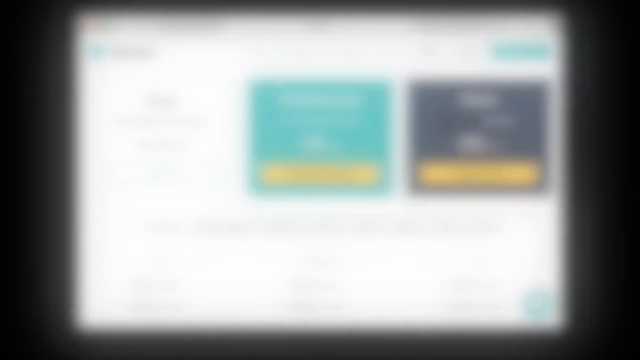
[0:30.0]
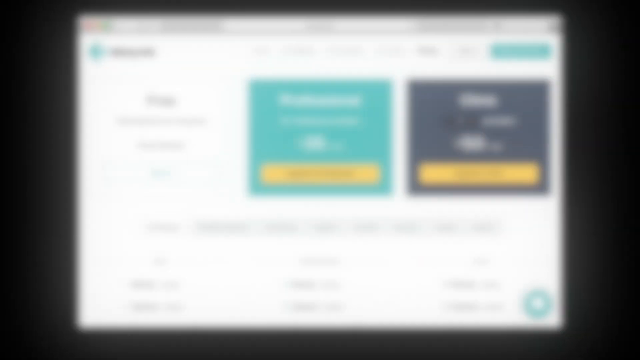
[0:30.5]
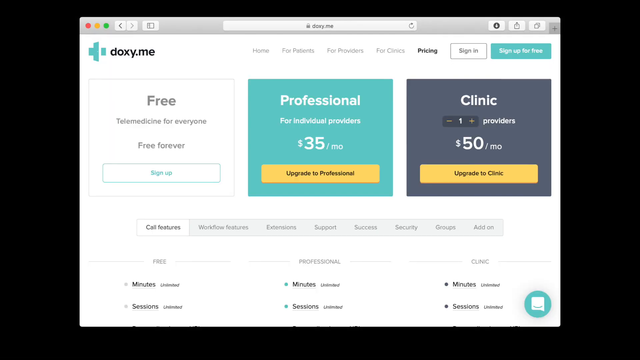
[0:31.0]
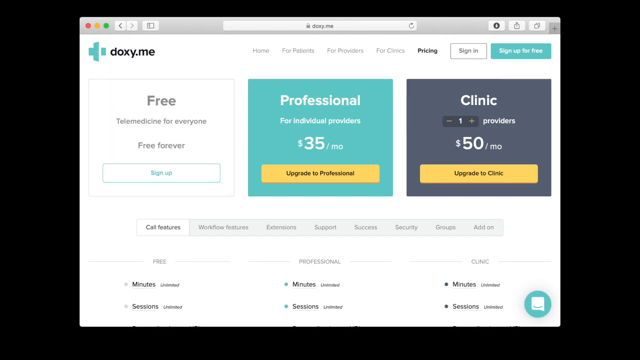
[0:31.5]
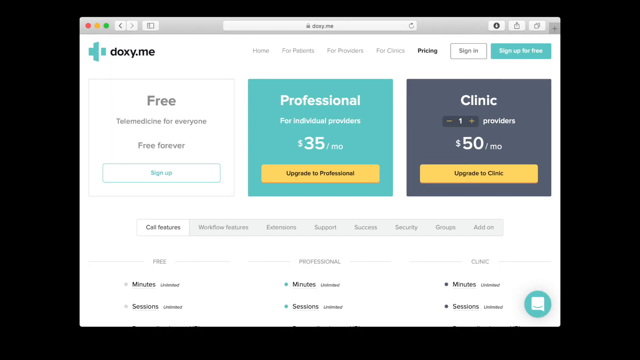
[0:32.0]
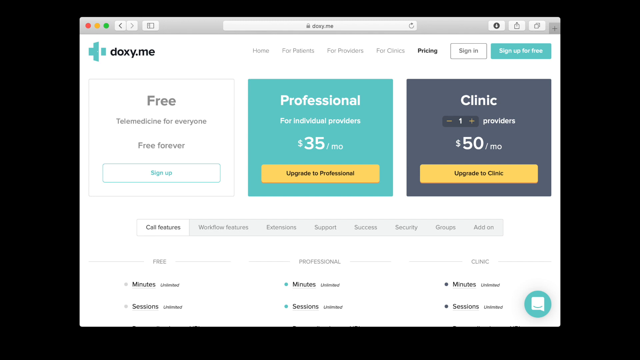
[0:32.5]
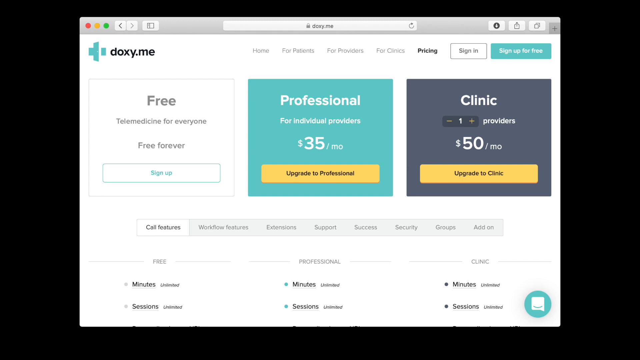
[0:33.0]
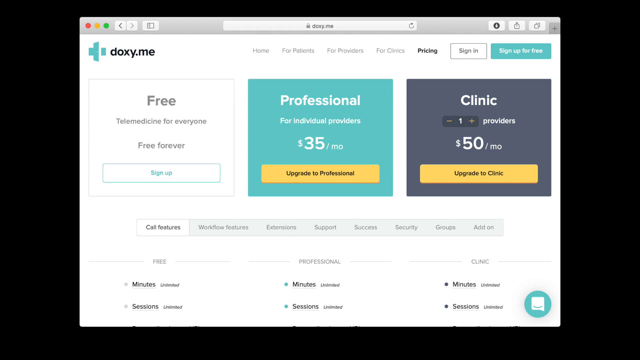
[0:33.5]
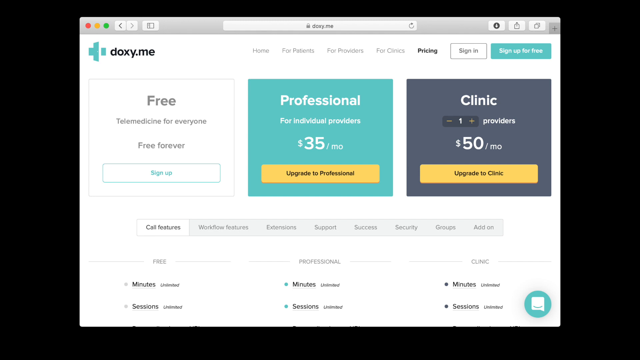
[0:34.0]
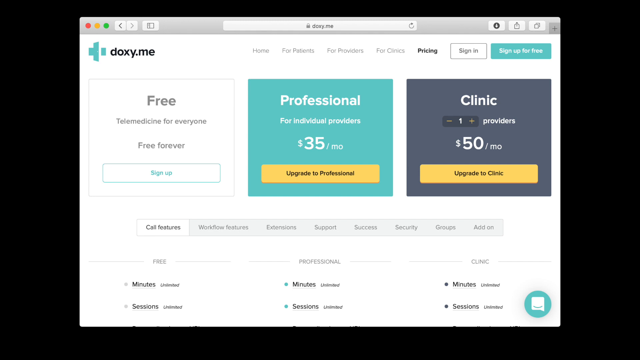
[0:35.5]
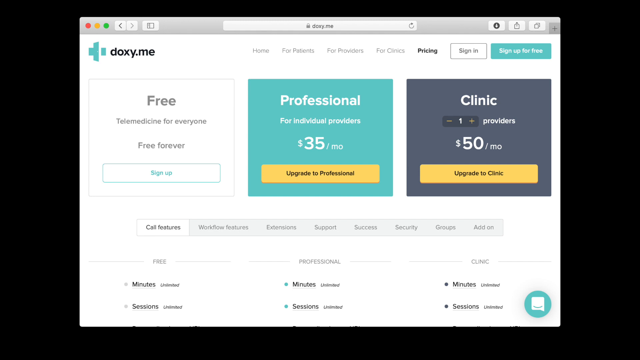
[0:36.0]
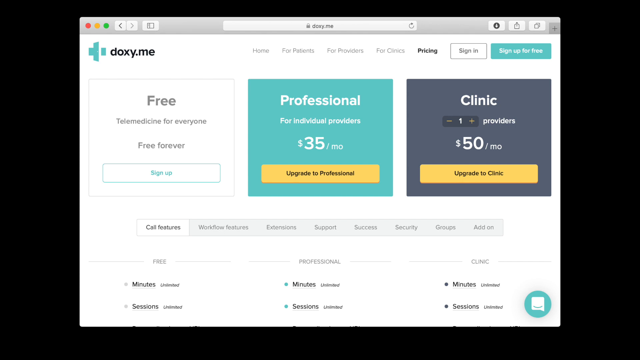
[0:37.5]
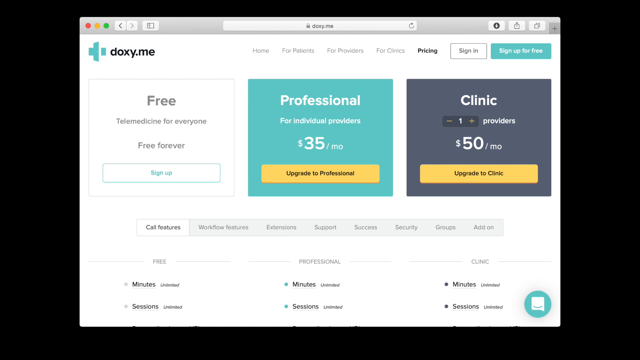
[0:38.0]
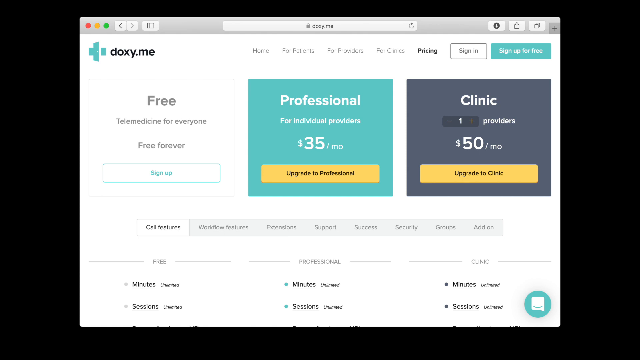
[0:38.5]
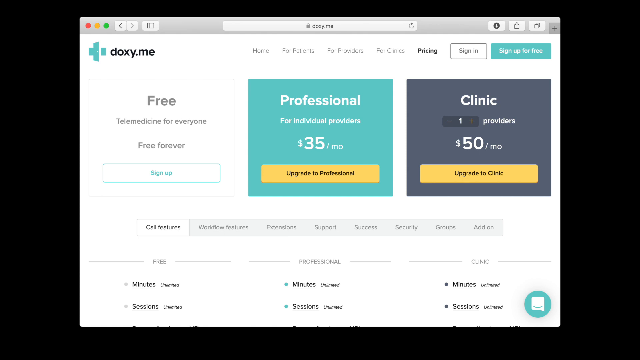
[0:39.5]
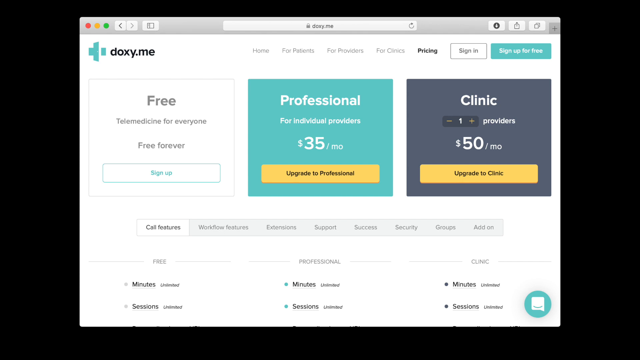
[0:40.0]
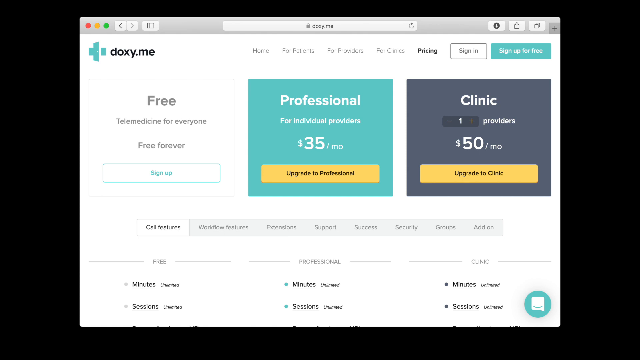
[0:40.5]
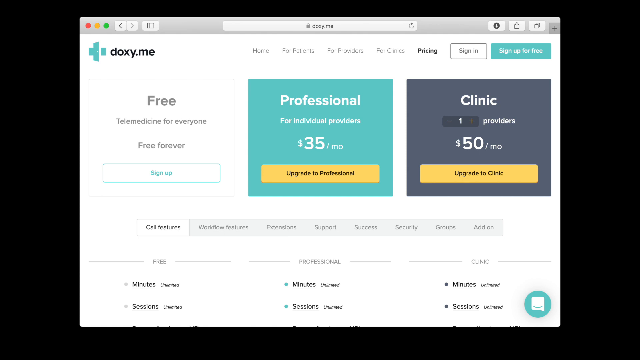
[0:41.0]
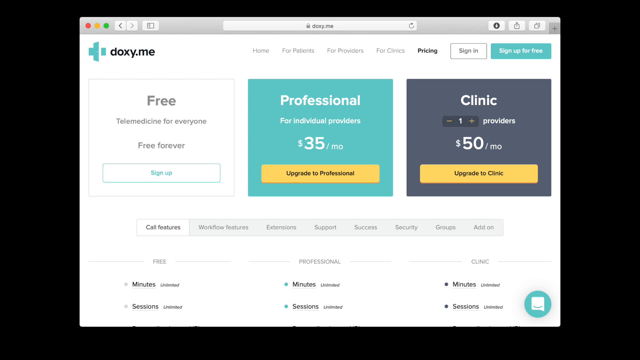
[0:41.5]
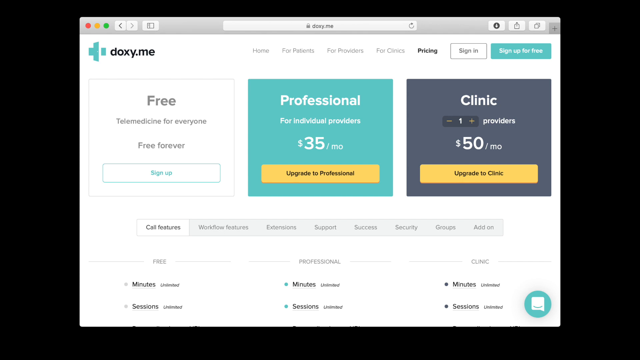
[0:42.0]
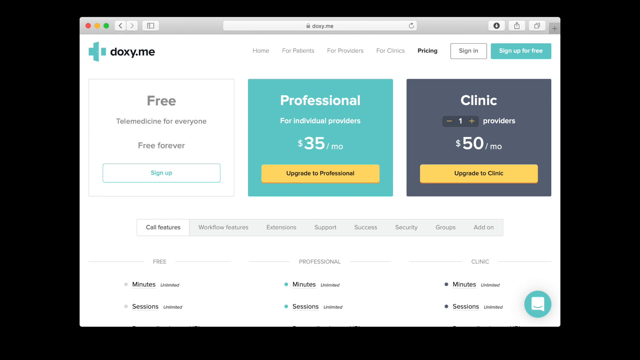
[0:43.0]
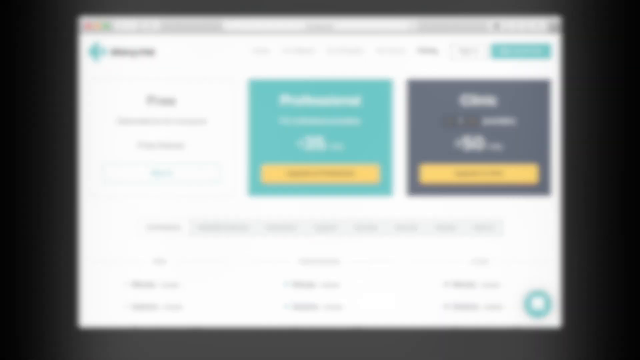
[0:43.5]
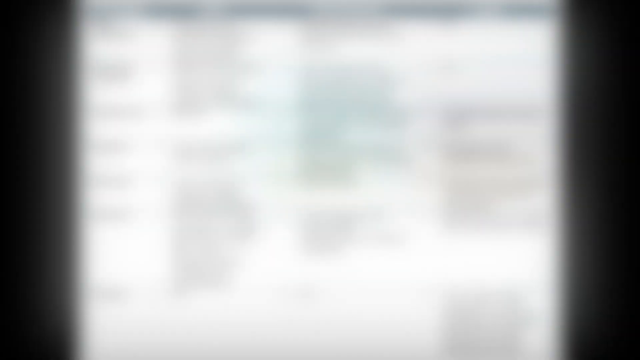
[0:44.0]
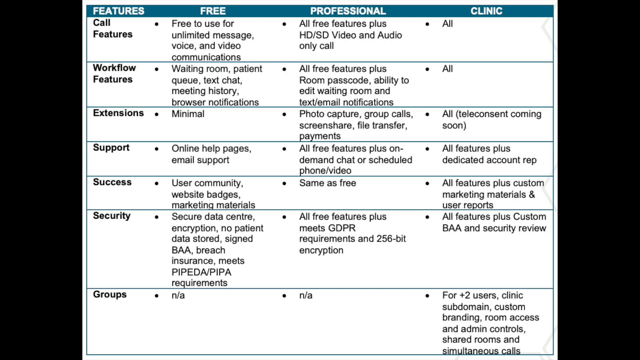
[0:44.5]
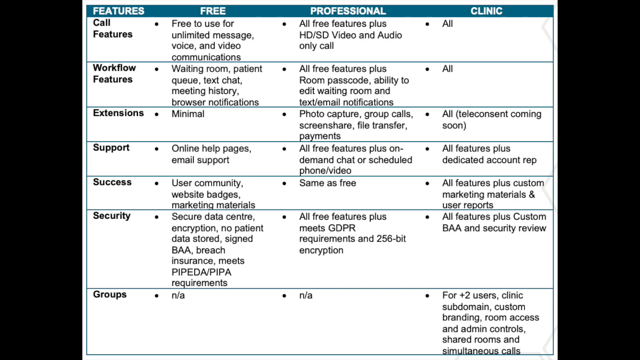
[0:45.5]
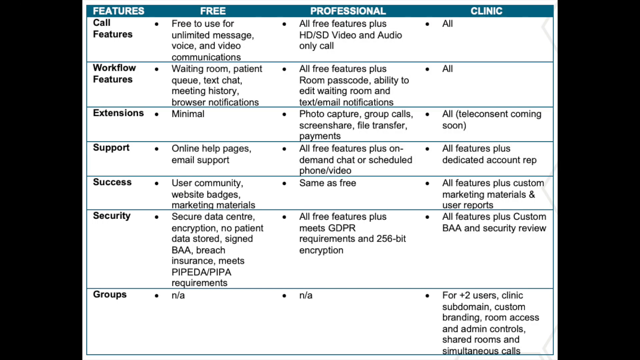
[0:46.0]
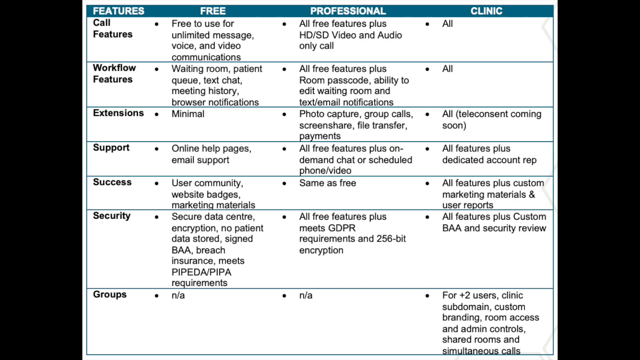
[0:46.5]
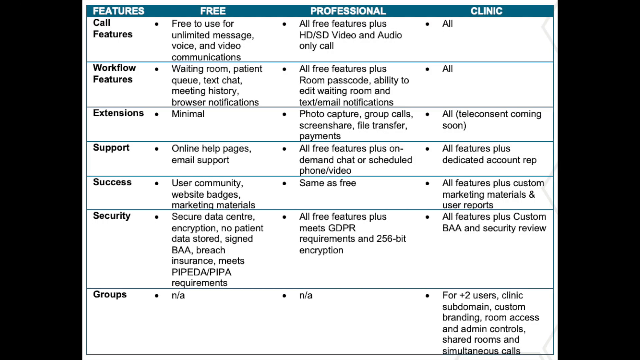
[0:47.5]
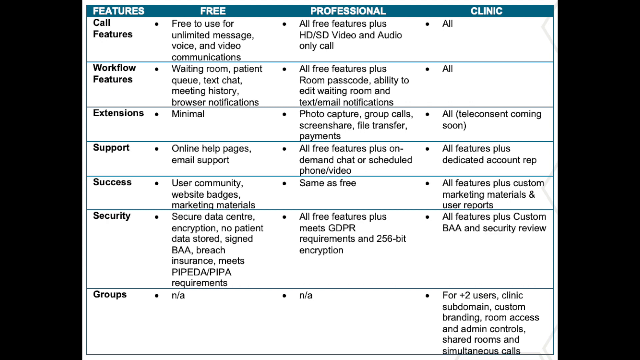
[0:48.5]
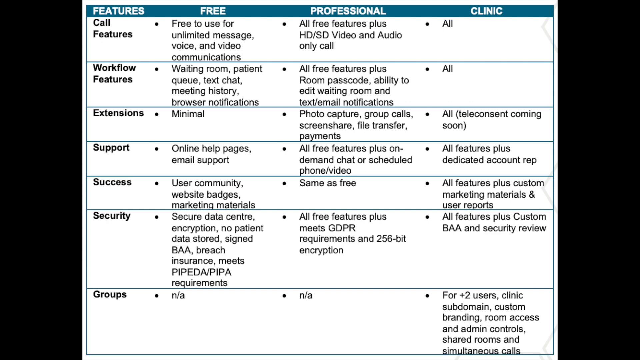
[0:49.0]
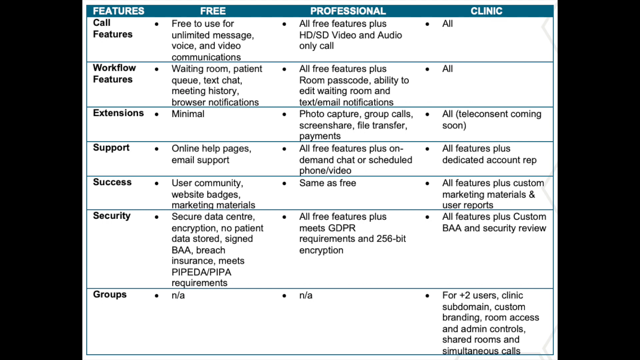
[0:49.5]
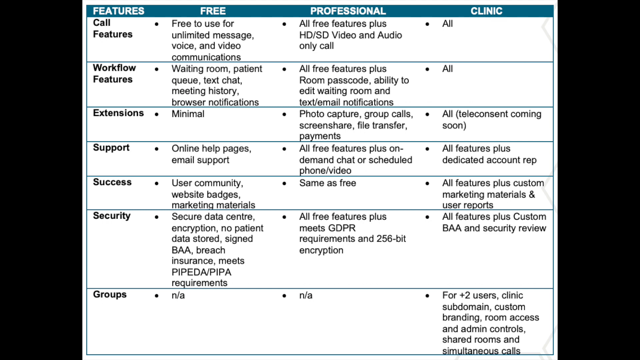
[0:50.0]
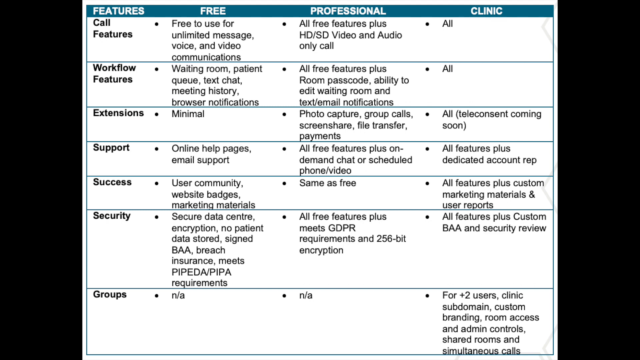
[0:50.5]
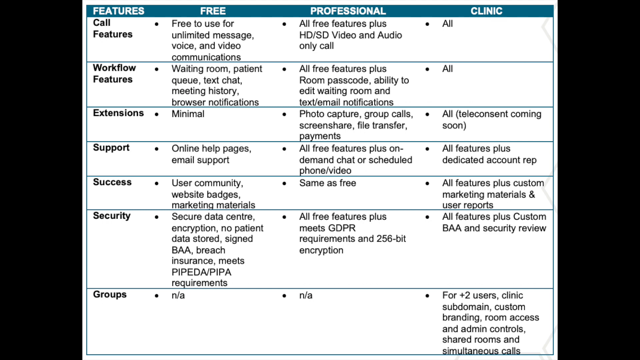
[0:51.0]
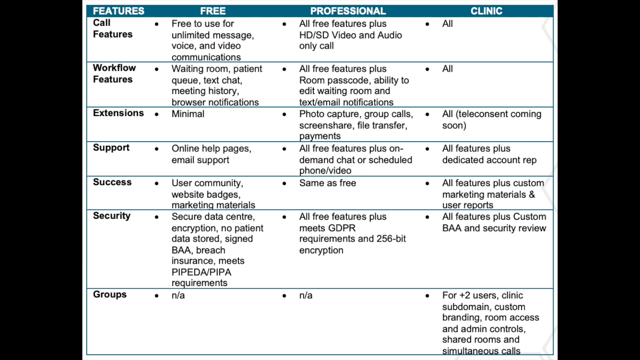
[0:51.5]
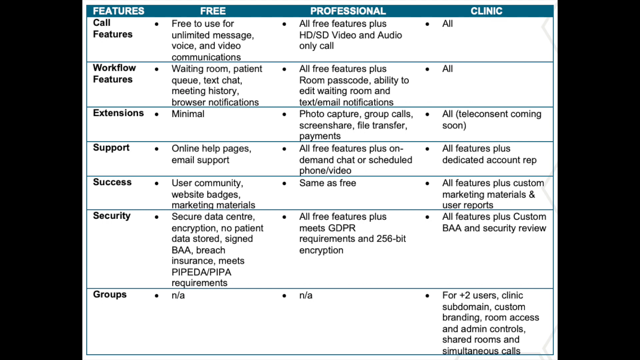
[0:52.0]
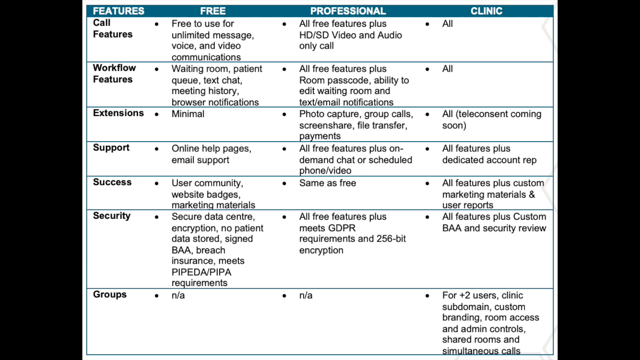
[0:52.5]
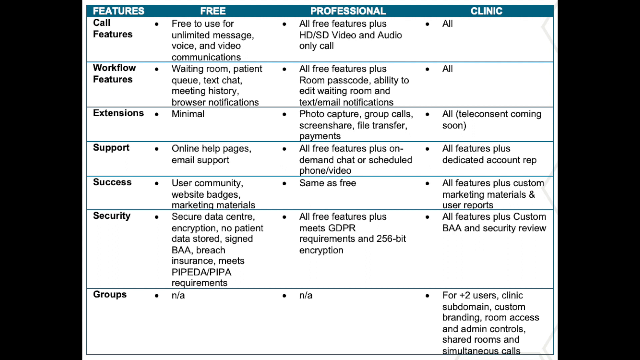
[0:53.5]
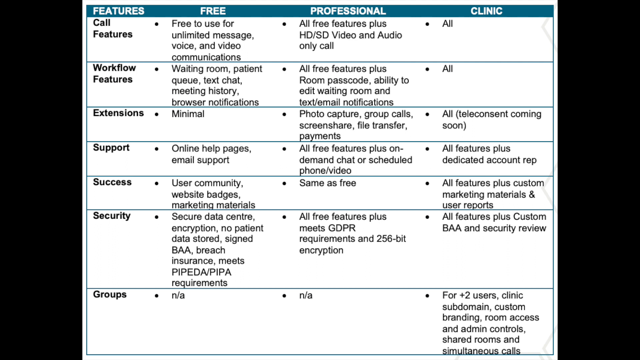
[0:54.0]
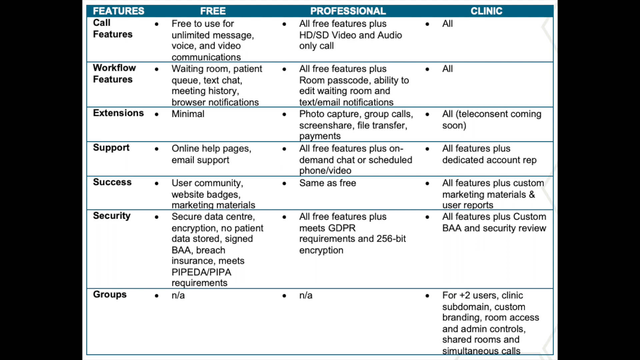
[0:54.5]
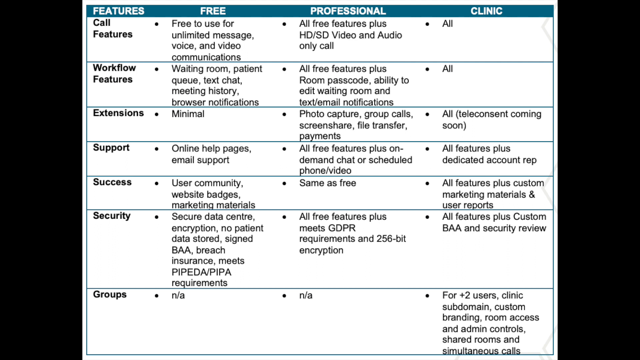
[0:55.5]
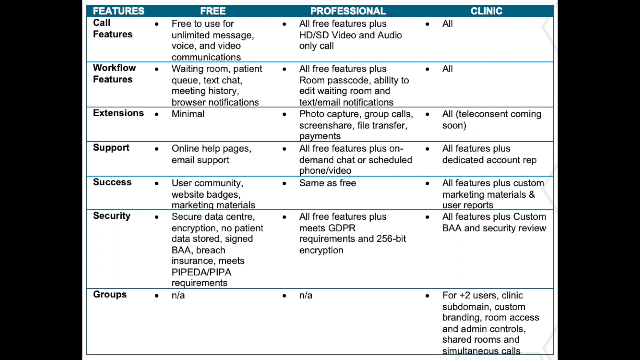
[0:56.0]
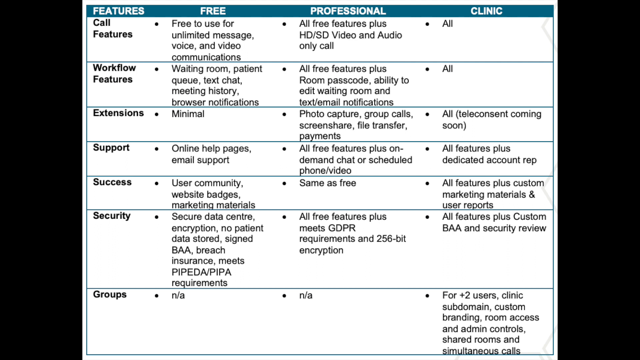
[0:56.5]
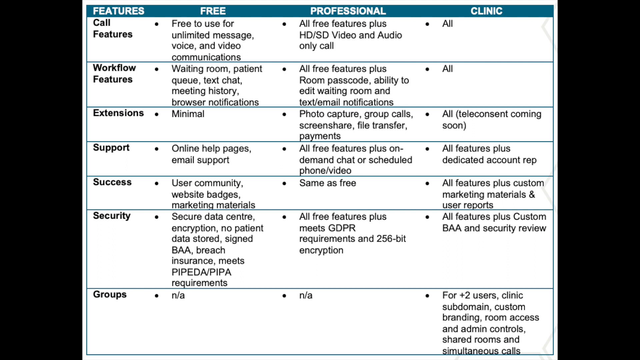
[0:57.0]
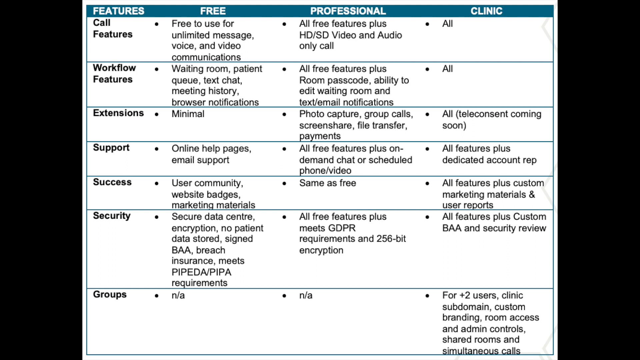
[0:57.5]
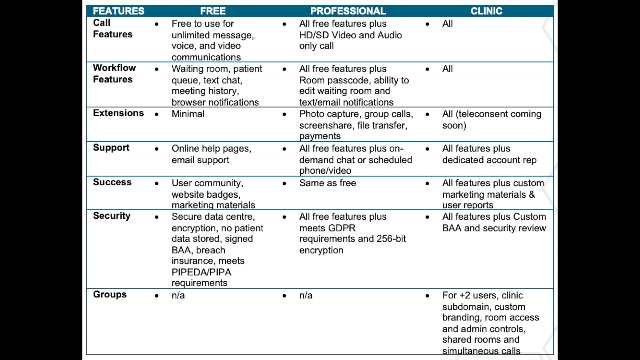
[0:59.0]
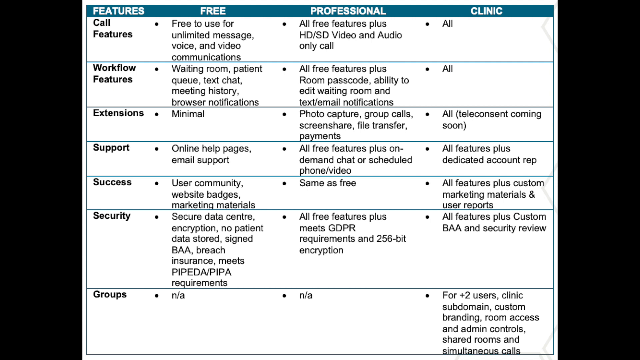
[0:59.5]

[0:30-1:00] A doxy.me website page offers three choices in square blocks at the top: free on the left, professional for $35 a month in the middle, and clinic with one provider for $50 a month on the right, with options to "upgrade to professional" or "upgrade to clinic." Tabs for navigating the website are at the top right of the page. Another page of the website follows, headed "Features," "Free," "Professional," and "Clinic," comparing the membership levels. Under Features are Call Features, Workflow Features, Extensions, Support, Success, and Security, and each differs by level. Under Free: unlimited messages, voice, and video communications; a waiting room, patient queue, text chat, meeting history, and browser notifications; minimal extensions; support limited to online help pages and email support; success as user community, website badges, and marketing materials; and security as secure data center, encryption, no patient data stored, signed BAA, breach insurance, and meeting HIPAA, PIPEDA, and PIPA requirements. Under Professional: all free features plus HD, SD video and audio-only calls; all free features plus room passcode, ability to edit waiting room, and text mail notifications; photo capture, group calls, screenshots, file transfer, and payments; all free features plus on-demand chat; success the same as free; and security as all free features plus meeting GDPR requirements and 256-bit encryption. Under Clinic: all call features, all workflow features, all extensions, all features plus a dedicated account representative under support, all features plus custom marketing materials and user reports under success, and all features plus custom BAA and security review under security.